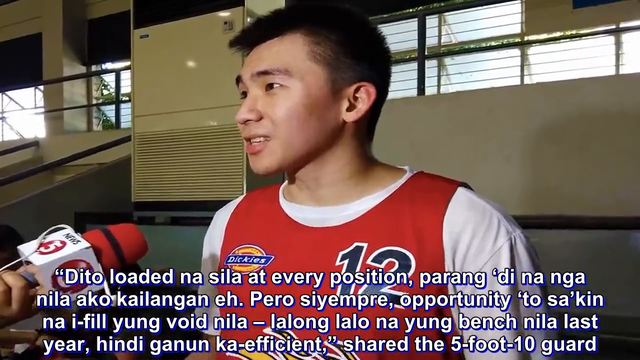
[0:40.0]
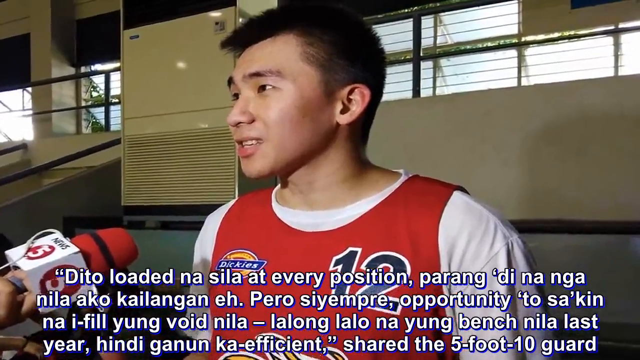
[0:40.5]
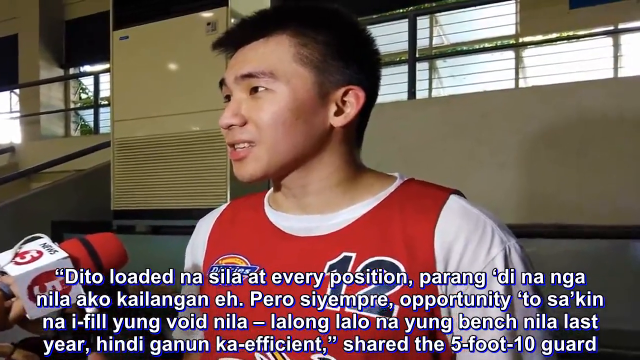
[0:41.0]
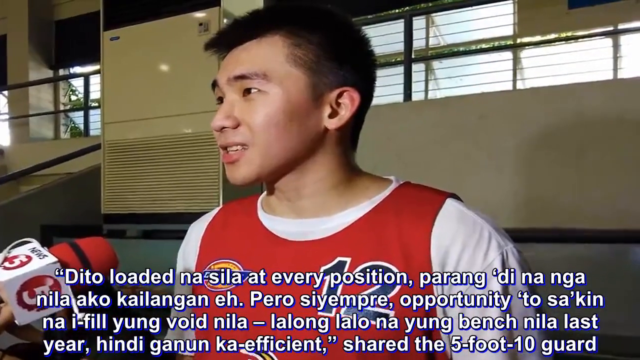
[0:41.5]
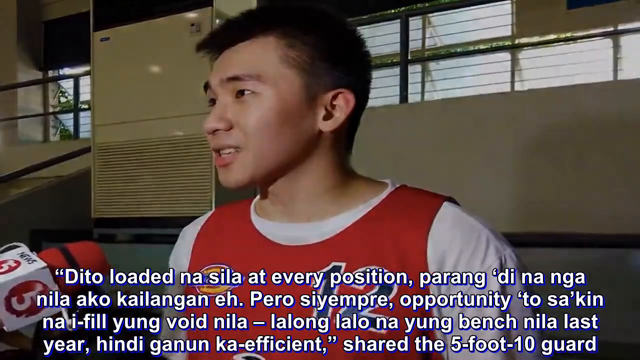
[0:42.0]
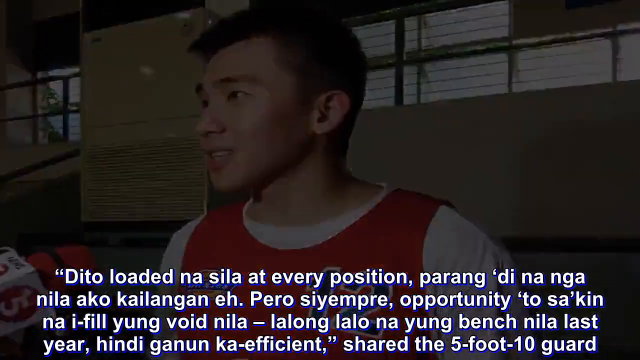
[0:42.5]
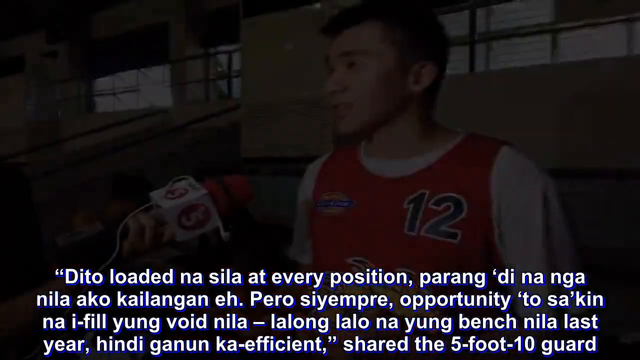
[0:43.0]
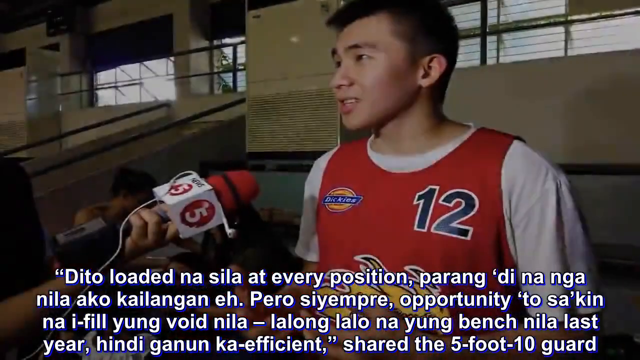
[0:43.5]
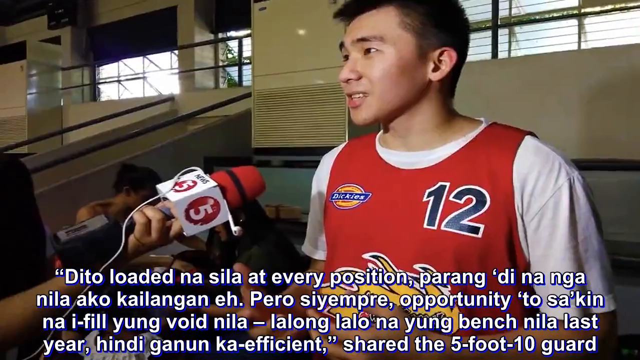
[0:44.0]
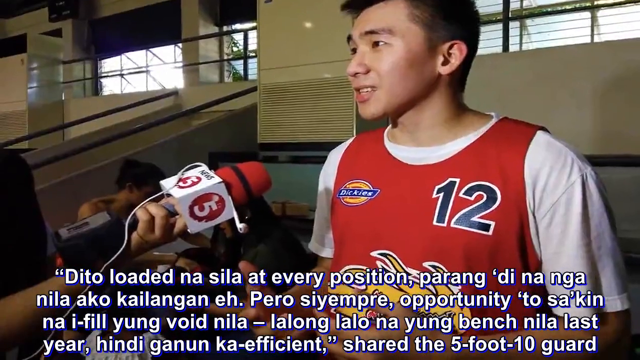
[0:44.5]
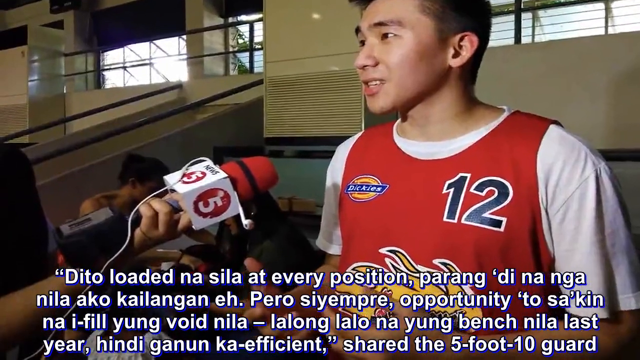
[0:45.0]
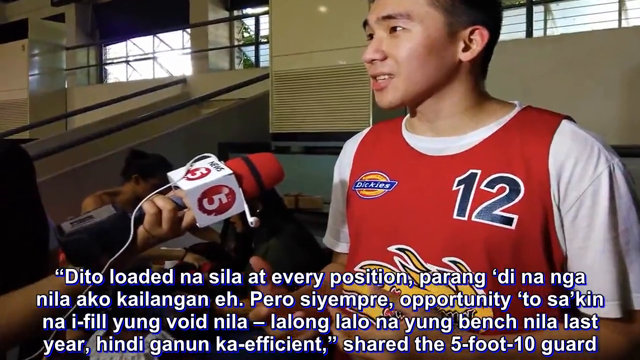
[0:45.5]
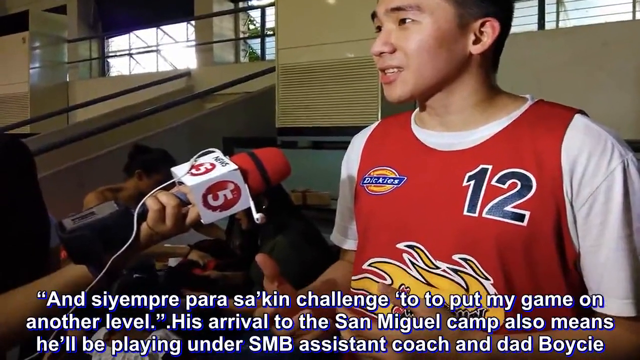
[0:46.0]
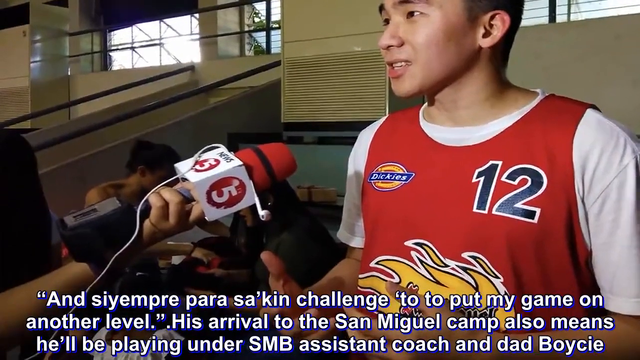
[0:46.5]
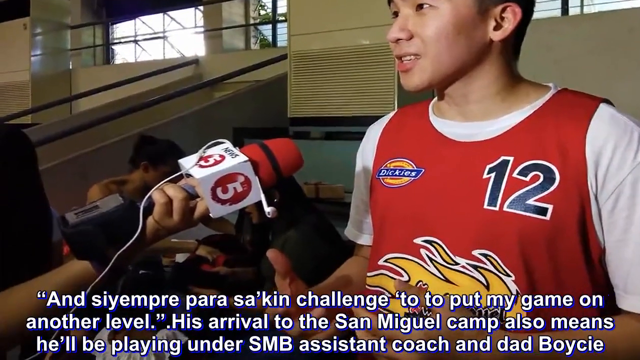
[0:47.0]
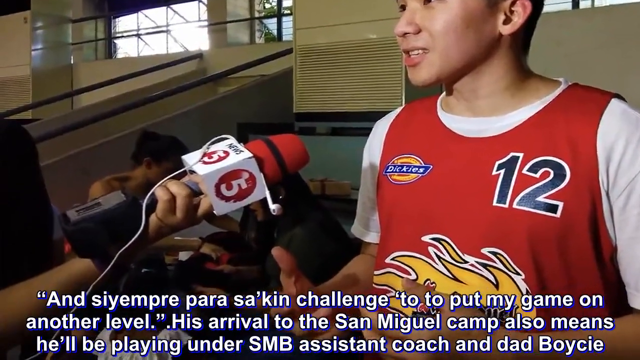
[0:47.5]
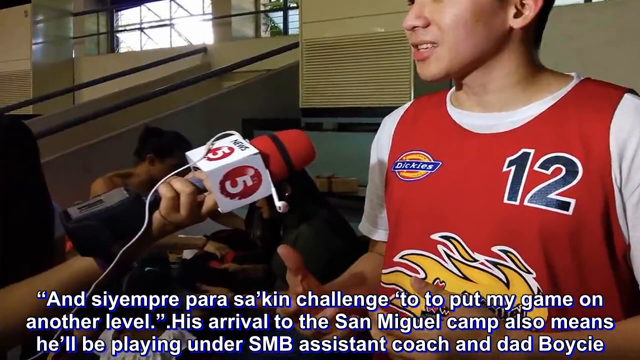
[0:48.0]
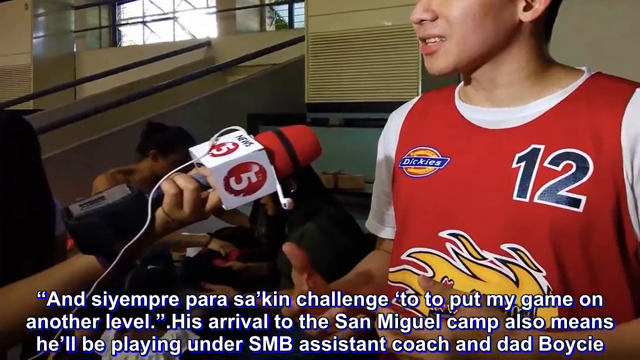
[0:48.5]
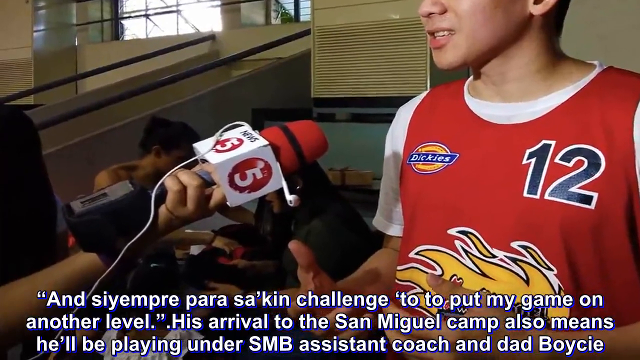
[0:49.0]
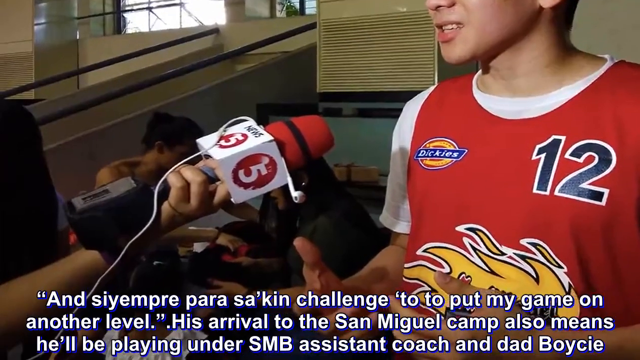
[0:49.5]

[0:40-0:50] The same location is shown, focused on what looks like a basketball player. He is an Asian male with short black hair, looking to the left, wearing a red jersey with the number 12 in black at the top left and a white undershirt. A person's hand holds a white and red microphone toward the player. The background is a sort of whitish wall with some windows. Foreign-language subtitles appear at the bottom middle of the video. The camera zooms in and then blinks, and the view focuses on the bottom left, on the hand holding the microphone; that person also appears to be of Asian descent. Two women with black hair sit in the background at the bottom left, behind the microphone. The subtitles at the bottom middle keep changing in the same foreign language.